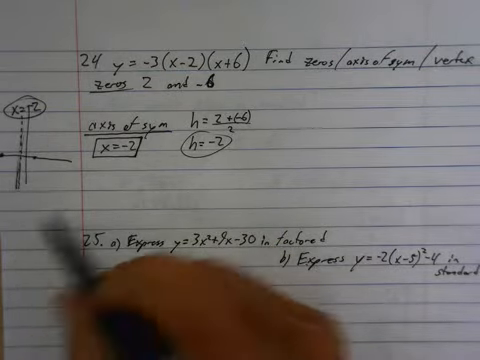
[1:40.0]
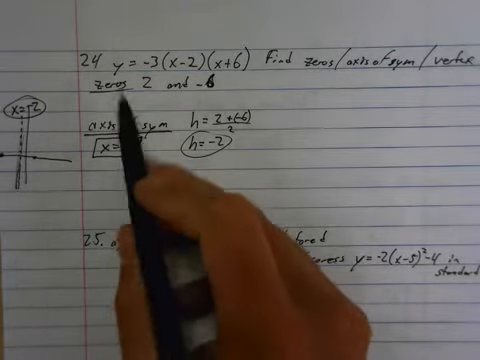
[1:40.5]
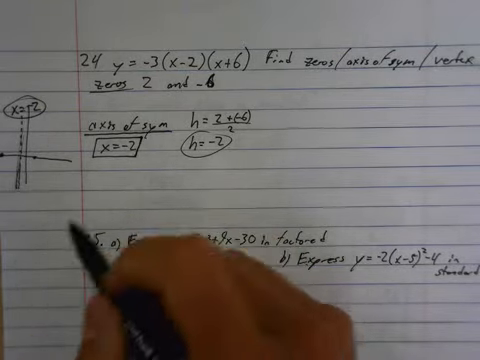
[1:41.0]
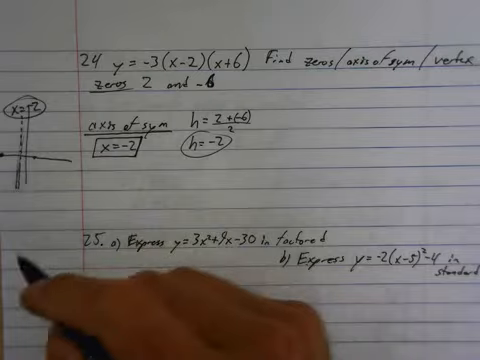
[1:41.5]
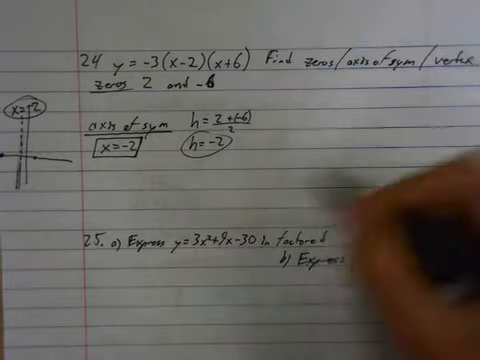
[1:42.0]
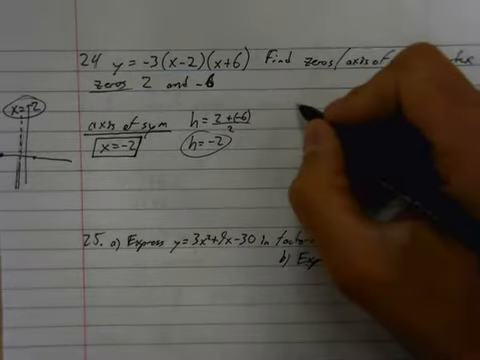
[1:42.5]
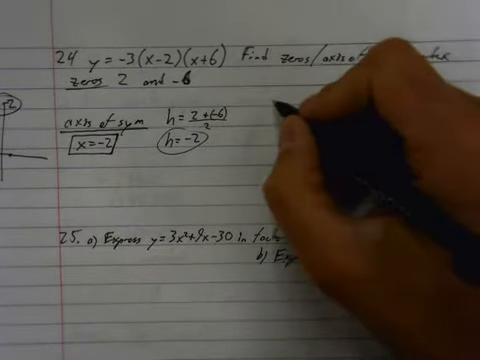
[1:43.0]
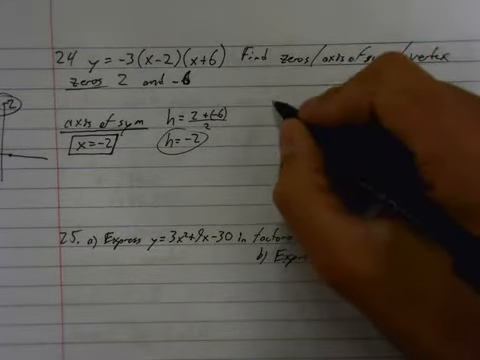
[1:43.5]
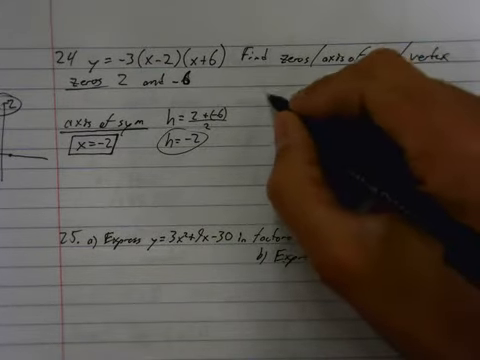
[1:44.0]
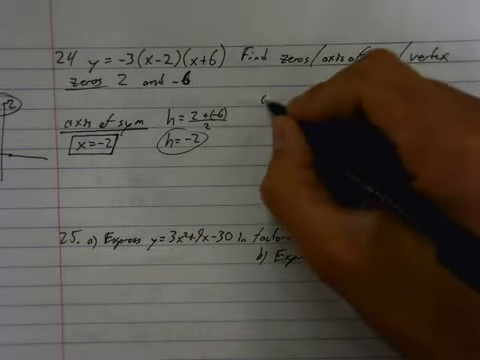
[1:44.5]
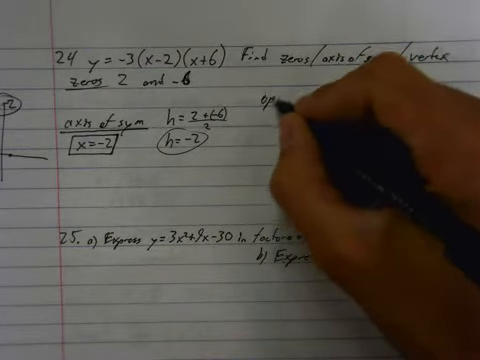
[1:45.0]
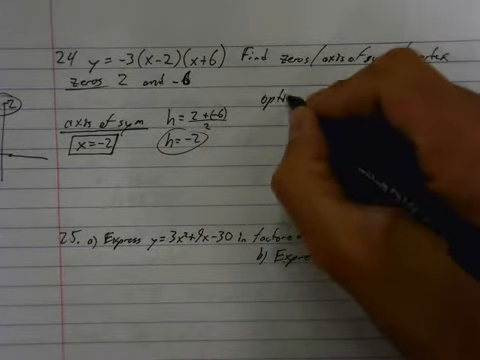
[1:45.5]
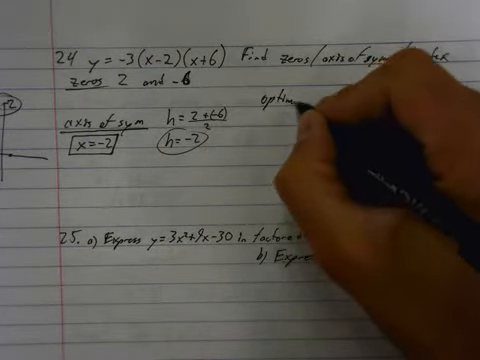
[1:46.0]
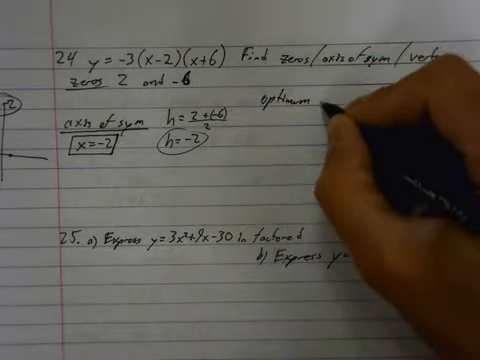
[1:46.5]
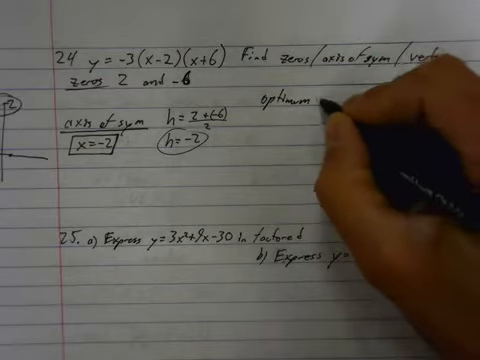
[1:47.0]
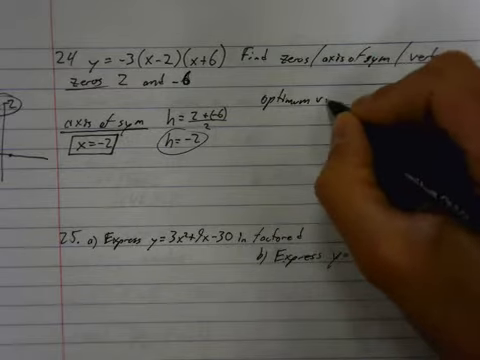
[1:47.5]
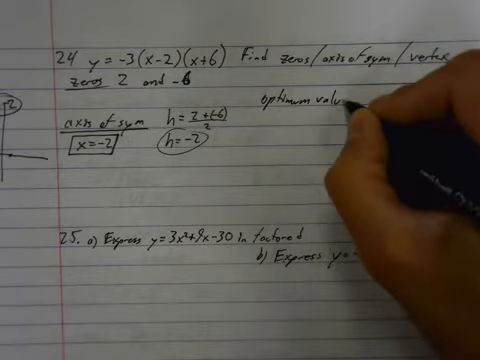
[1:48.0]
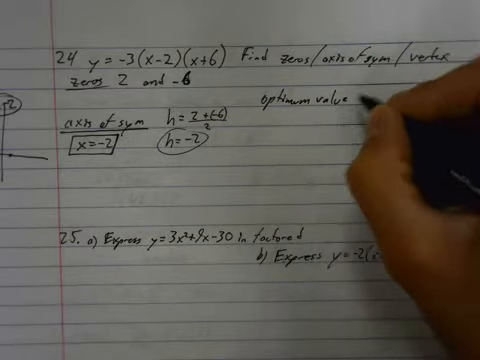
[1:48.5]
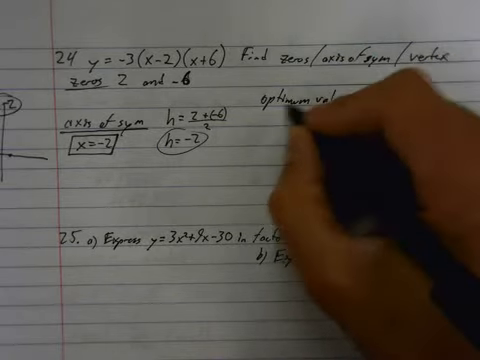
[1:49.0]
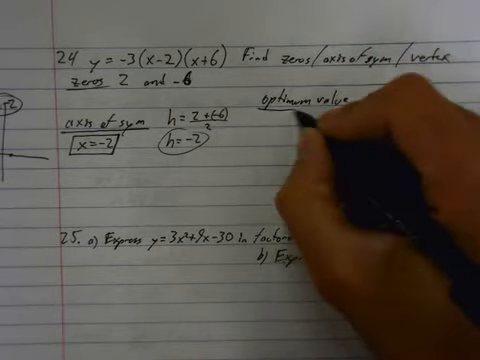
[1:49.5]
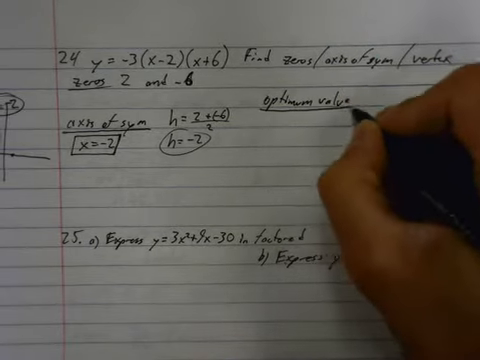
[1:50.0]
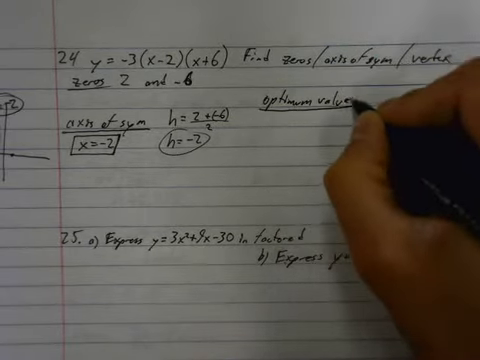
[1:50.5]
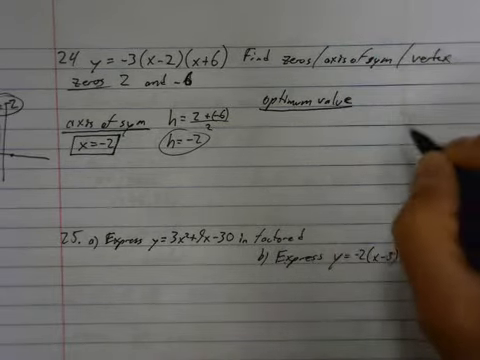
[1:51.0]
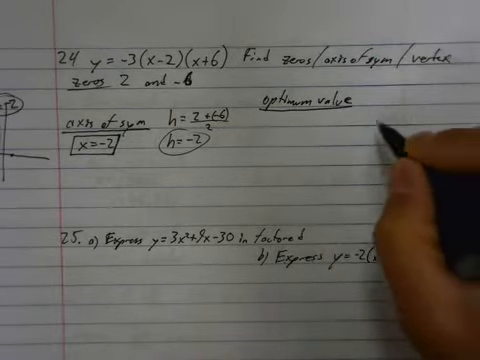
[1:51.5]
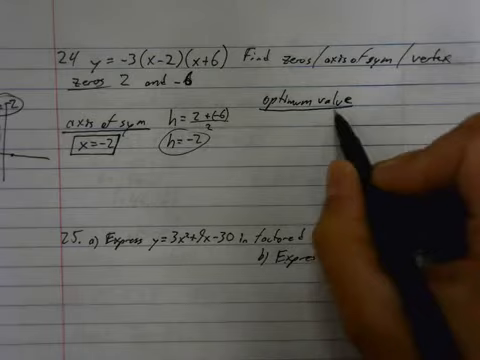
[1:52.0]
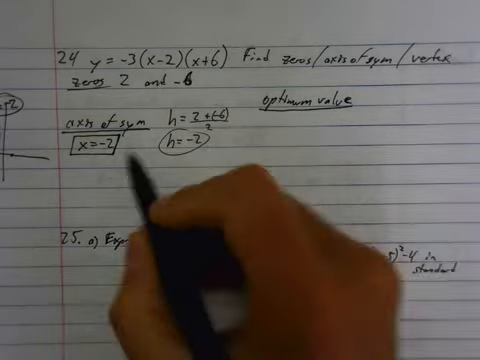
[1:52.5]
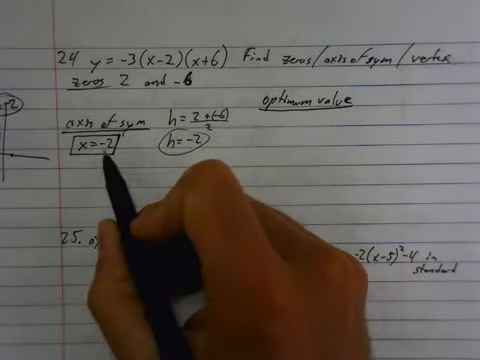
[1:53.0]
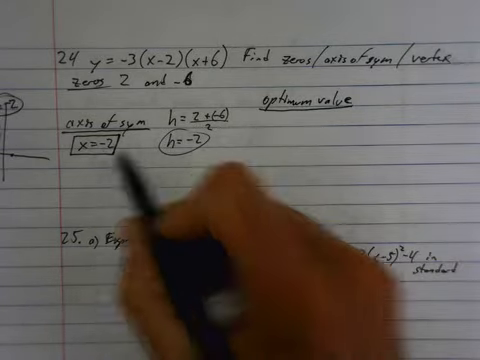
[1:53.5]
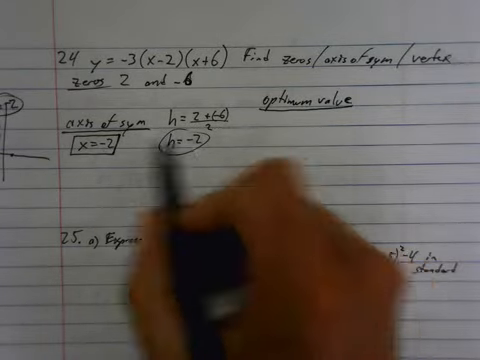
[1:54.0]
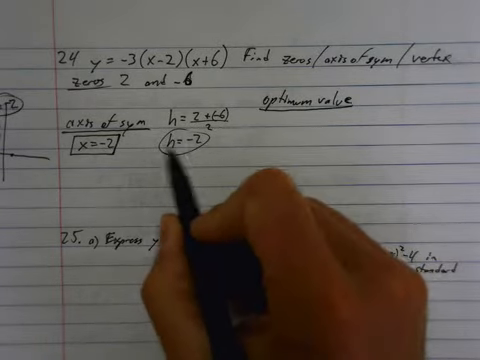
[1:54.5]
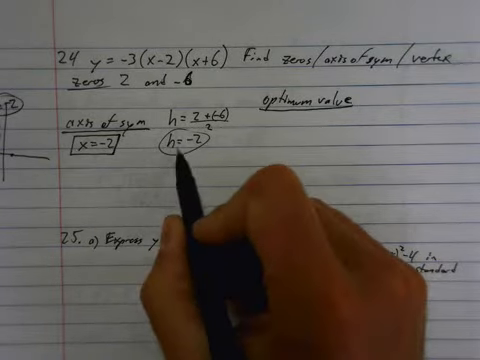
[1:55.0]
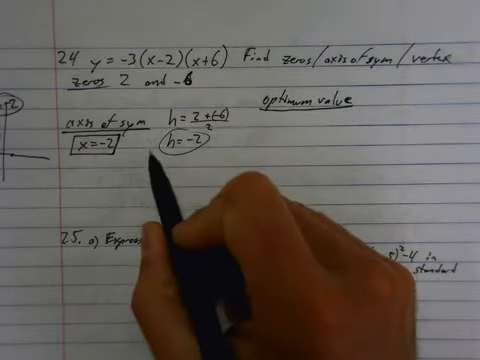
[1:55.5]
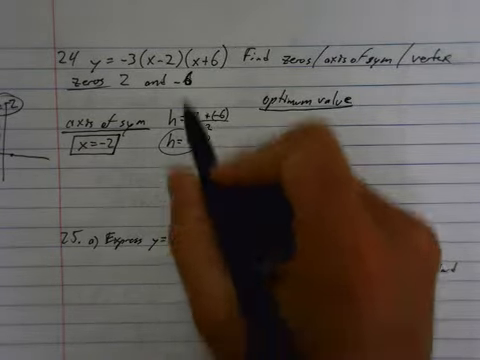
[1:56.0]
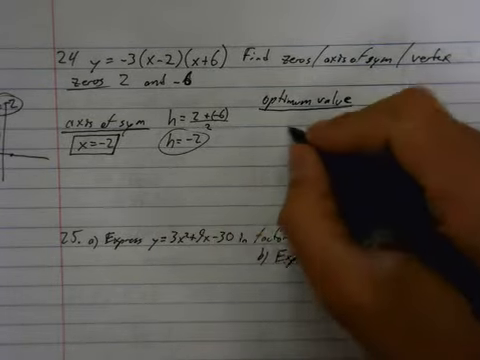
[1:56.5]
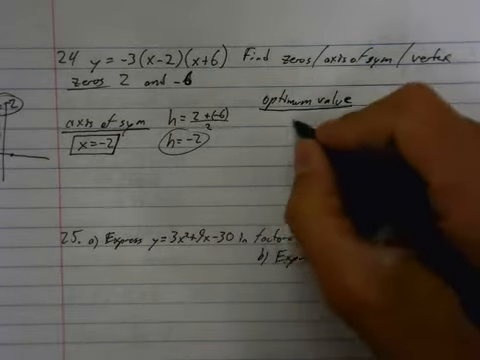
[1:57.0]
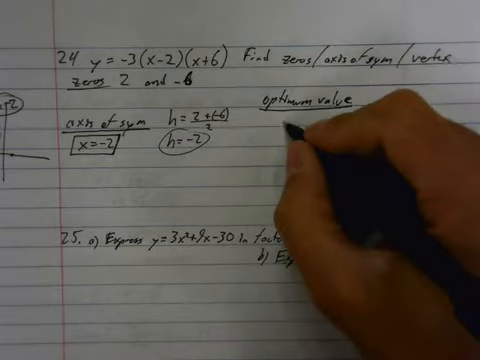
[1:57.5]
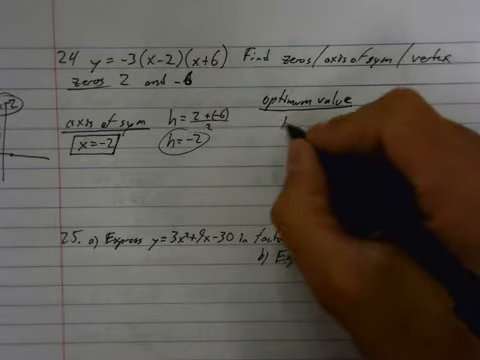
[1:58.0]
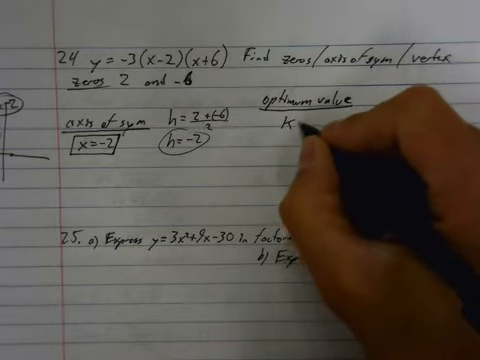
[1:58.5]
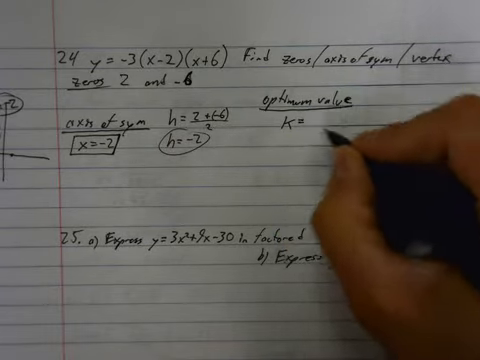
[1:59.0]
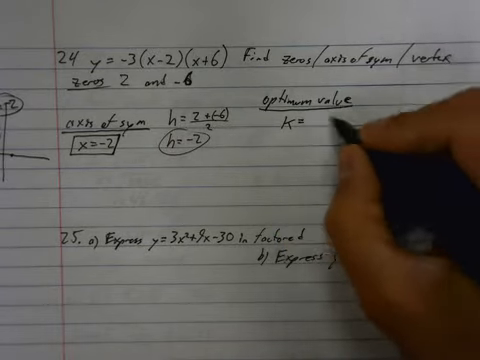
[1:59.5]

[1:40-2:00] The person keeps writing on the paper, adding equations, solutions and notes. Below the first equation at the top, they write "optimum value" and underline it. They go back to the work on the left and point at the x = -2 and the circled h = -2, then return to the optimum value section and write below the line "k = -" followed by more as they keep writing. All of the writing is done in black ink with a black pen held in the right hand, and the paper is getting filled in.